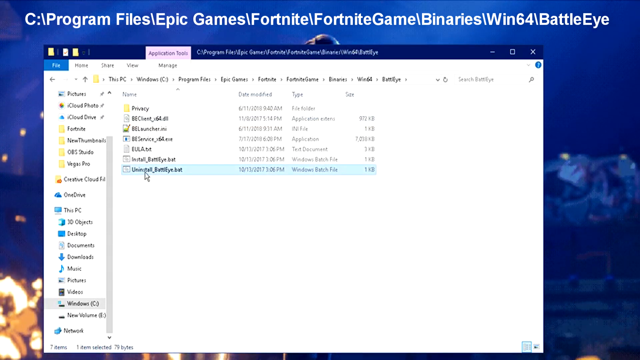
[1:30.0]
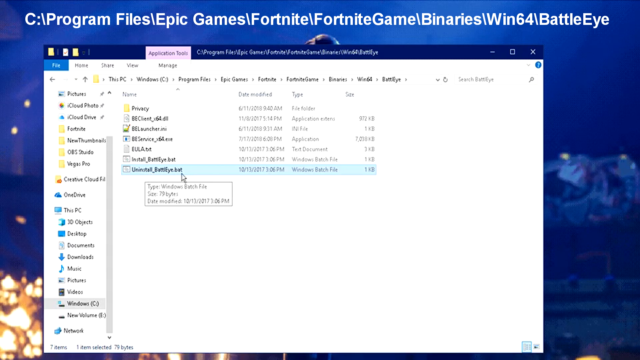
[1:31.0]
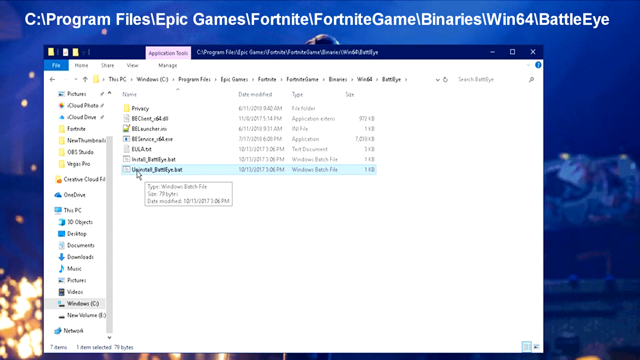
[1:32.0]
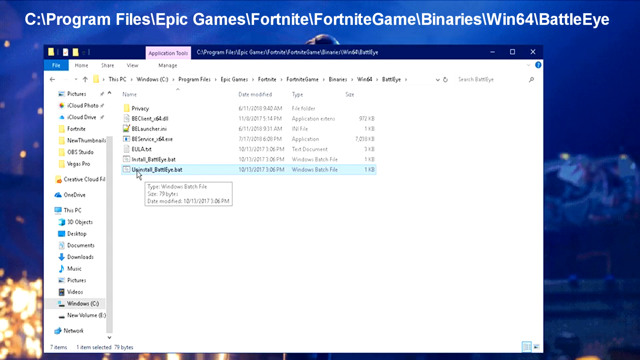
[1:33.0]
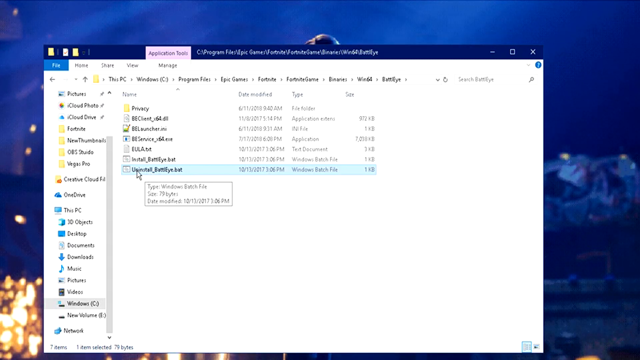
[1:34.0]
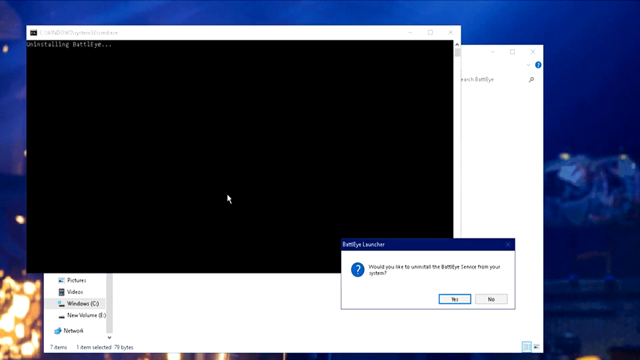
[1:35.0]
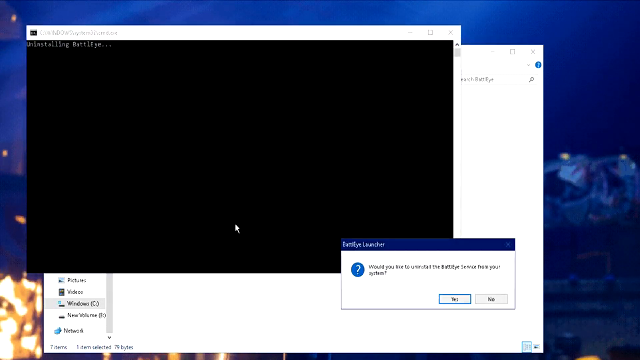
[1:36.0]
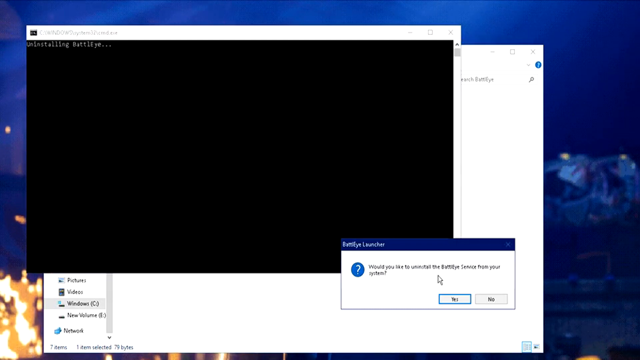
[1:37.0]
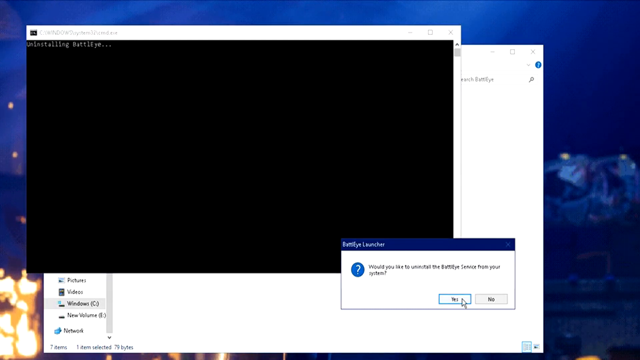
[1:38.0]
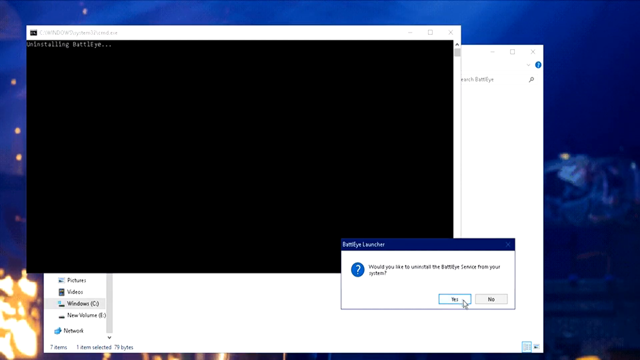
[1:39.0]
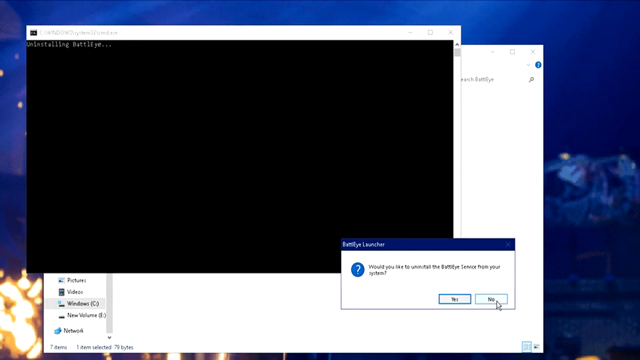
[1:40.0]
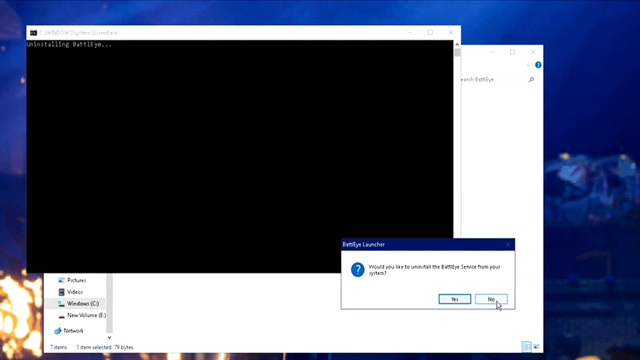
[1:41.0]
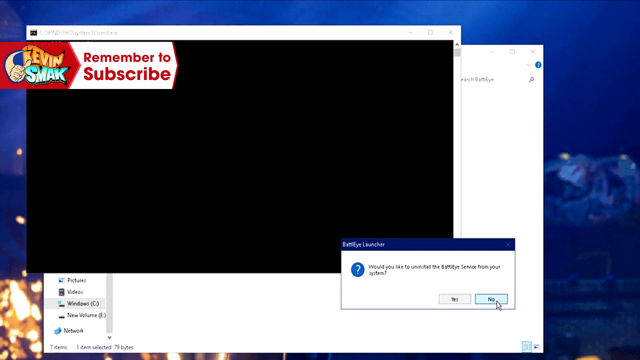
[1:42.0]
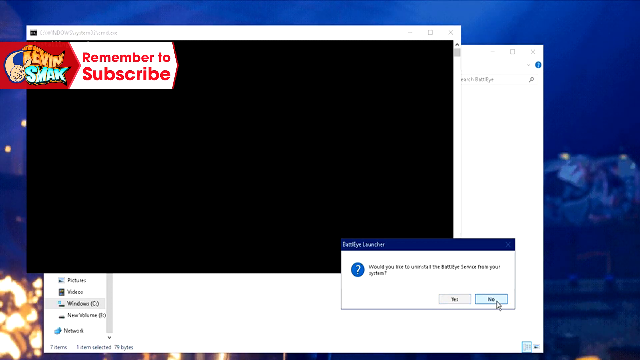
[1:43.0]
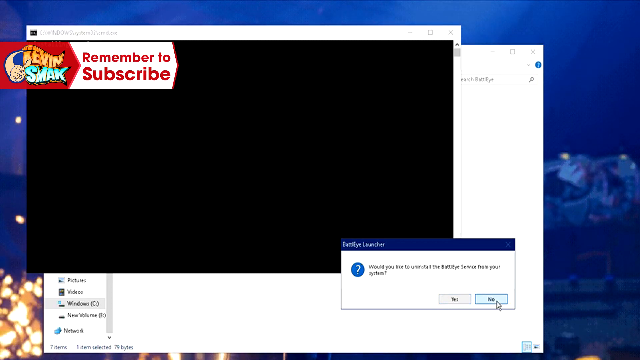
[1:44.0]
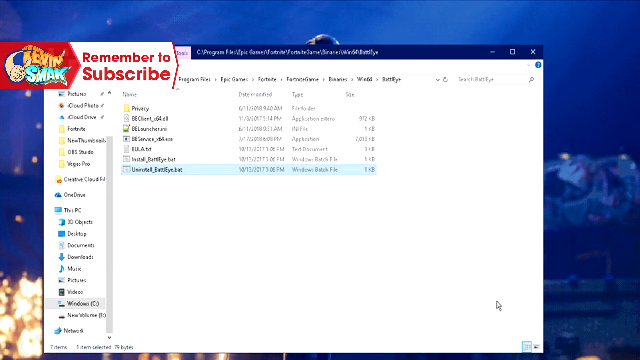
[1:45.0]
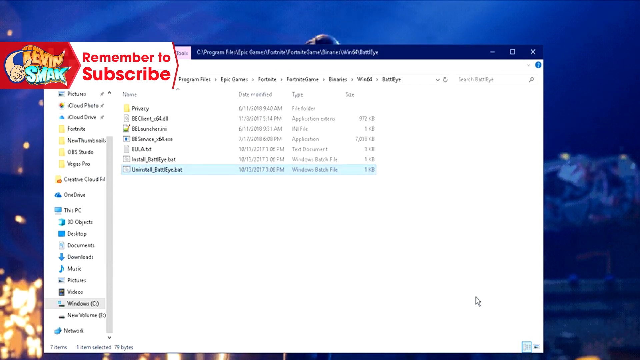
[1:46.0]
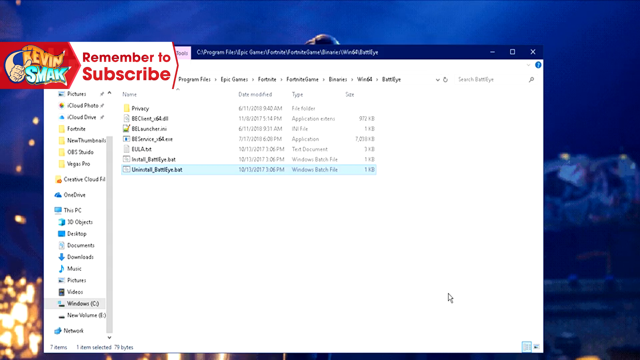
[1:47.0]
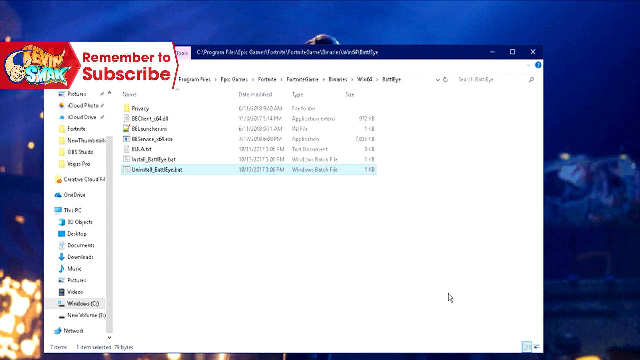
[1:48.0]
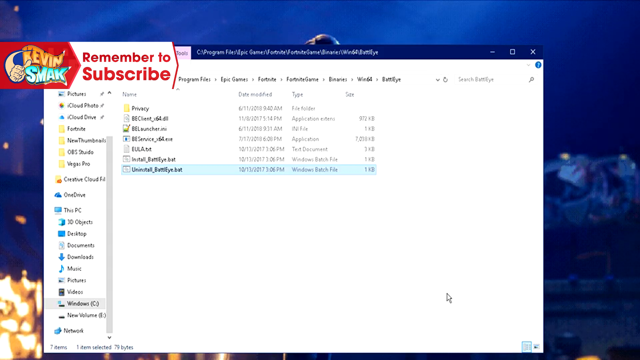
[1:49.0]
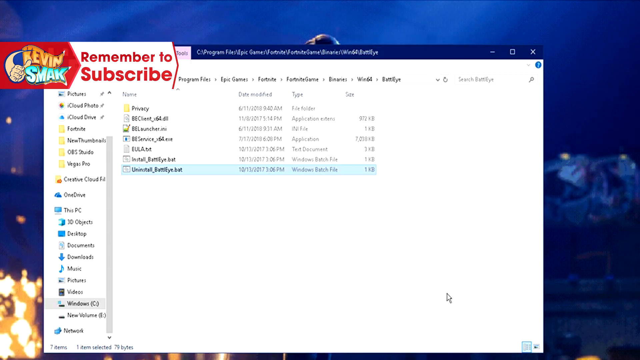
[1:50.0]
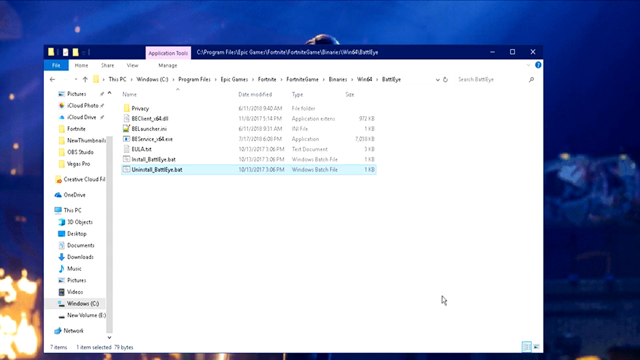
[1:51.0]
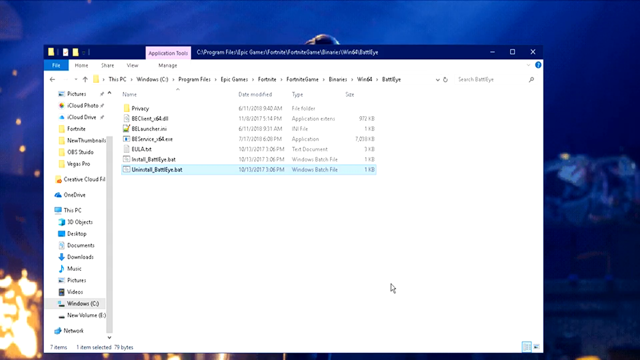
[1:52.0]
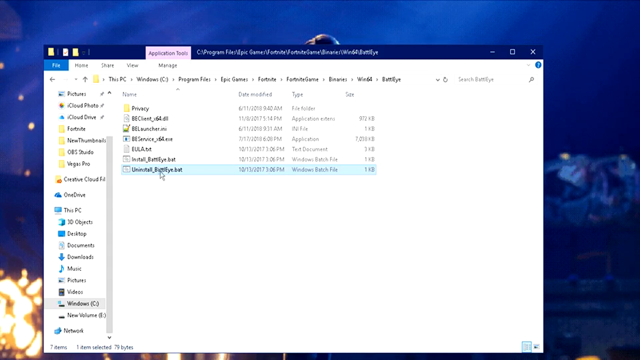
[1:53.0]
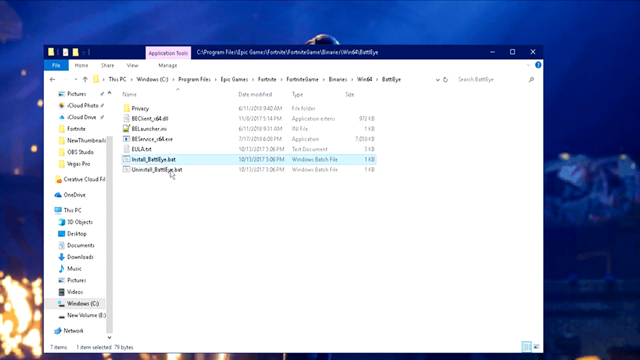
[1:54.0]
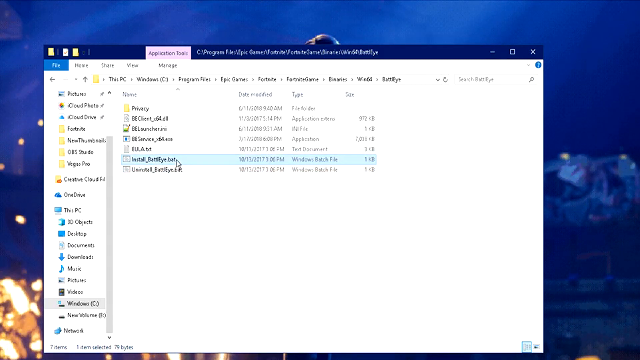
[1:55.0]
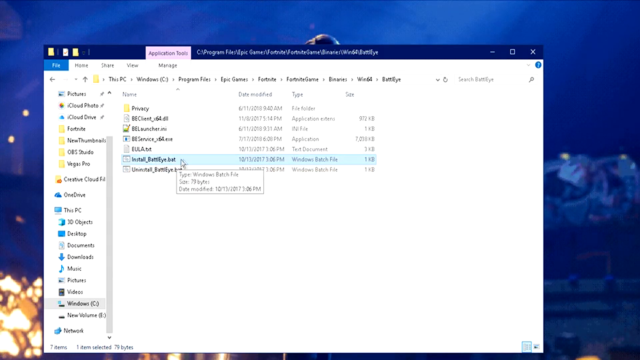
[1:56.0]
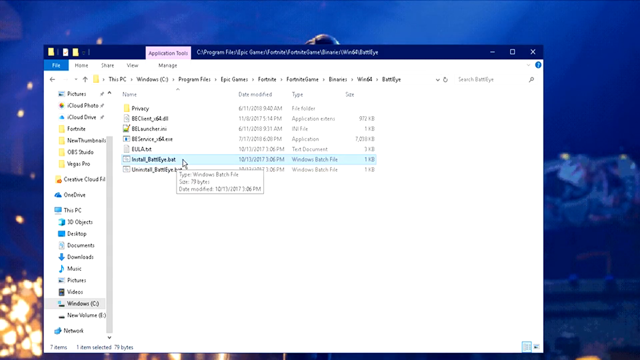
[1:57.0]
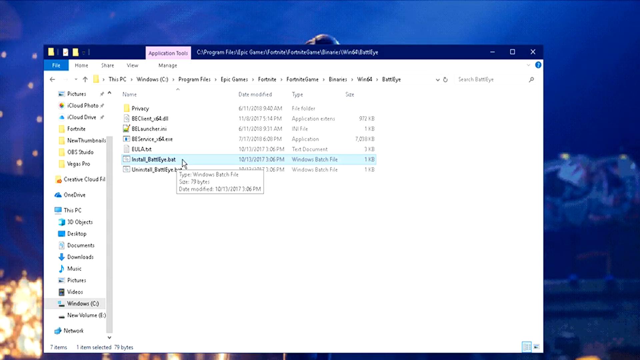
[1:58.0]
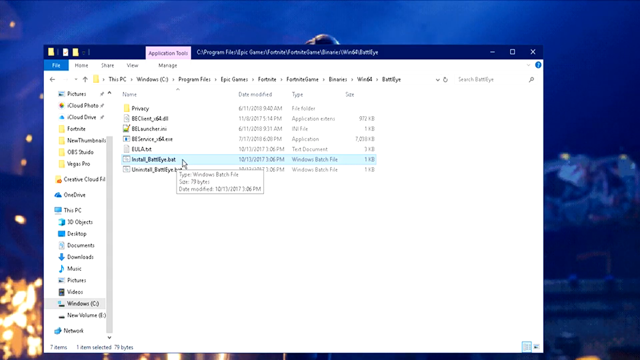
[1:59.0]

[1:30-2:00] White text appears at the top of the screen reading "program files epic games fortnite fortnite game binaries win64 battle eye", which looks to be a game file for Fortnite. He pauses his mouse on the text file before opening it. Once it opens, a new window pops up that is mostly completely black with a little white writing in the upper left-hand corner. A secondary window also pops up with a question; he hovers over the yes button, then over the no button, and ultimately clicks no. Another banner then pops up with what is likely his YouTube name, Kevin smack: the banner is a red arrow, and his logo has "kevin" written in orange and "smak" in blue. It also says "remember to subscribe" in red.